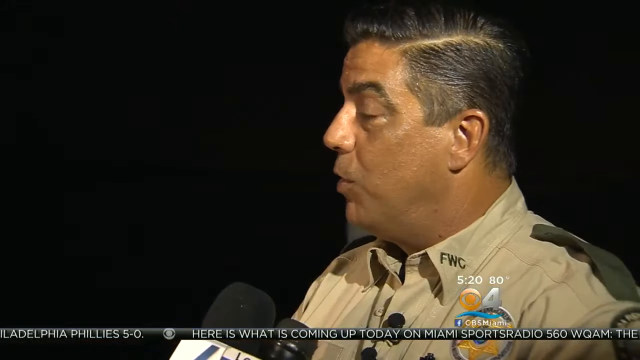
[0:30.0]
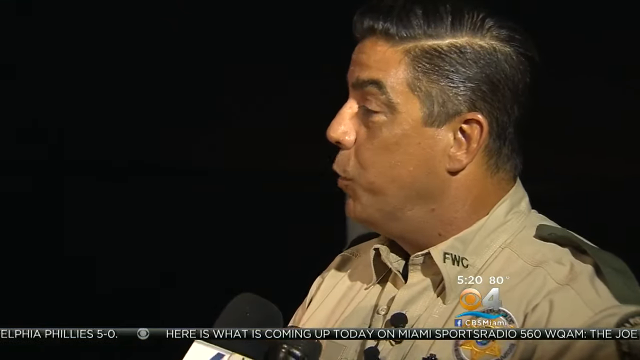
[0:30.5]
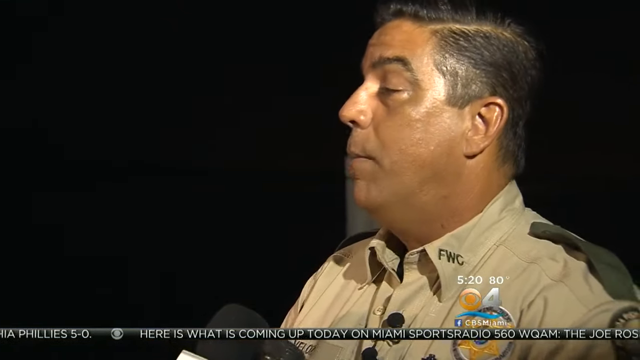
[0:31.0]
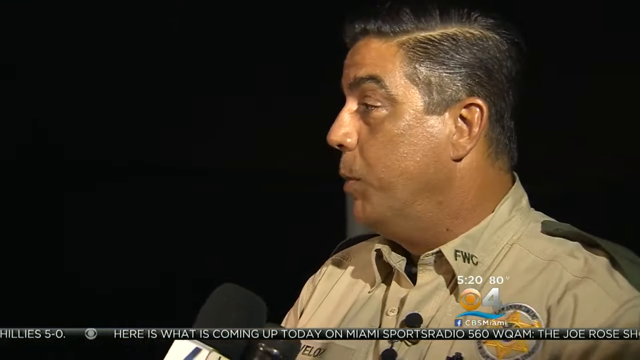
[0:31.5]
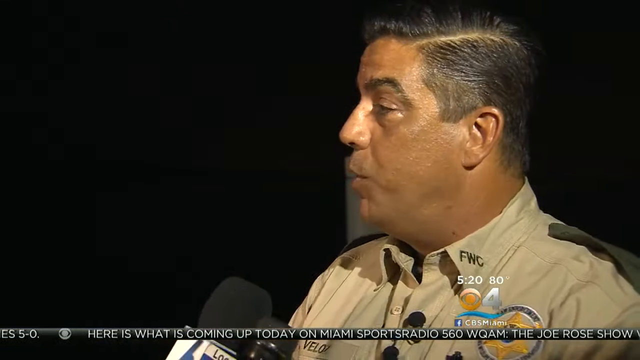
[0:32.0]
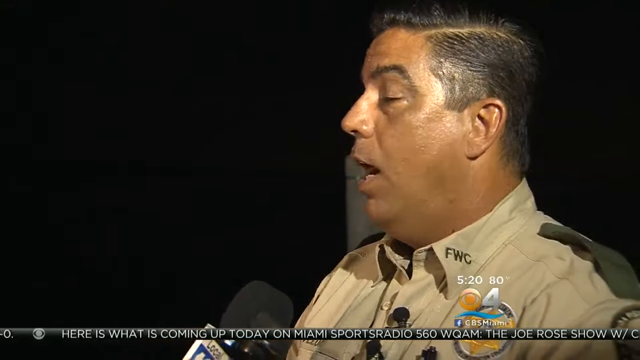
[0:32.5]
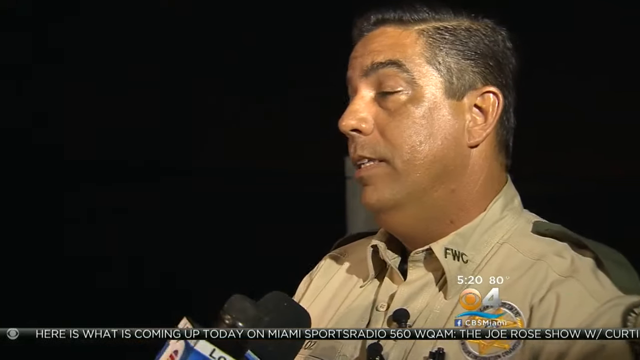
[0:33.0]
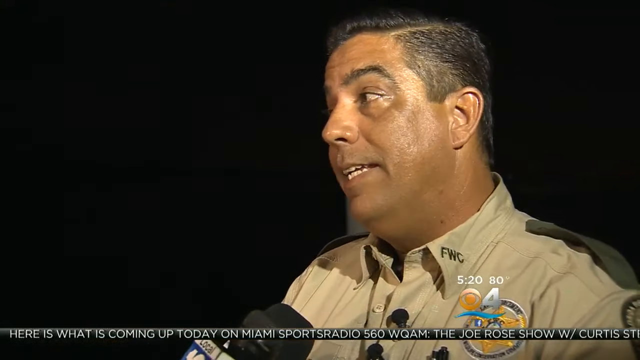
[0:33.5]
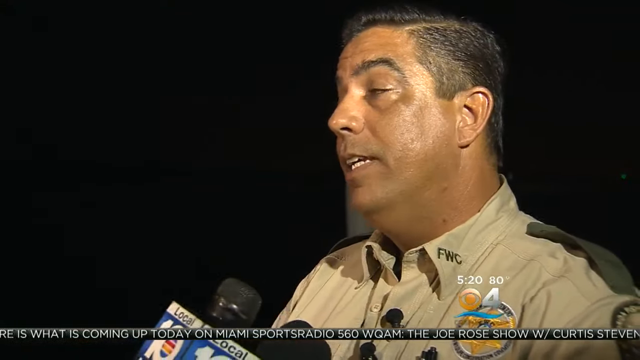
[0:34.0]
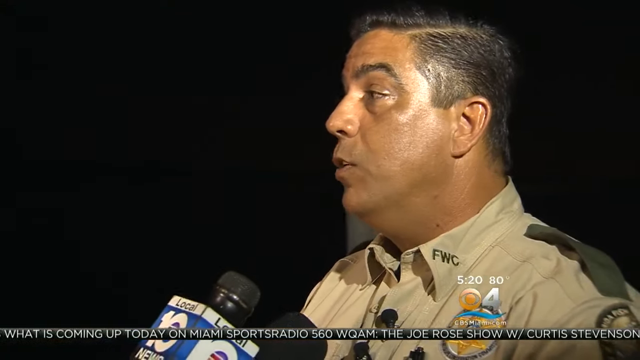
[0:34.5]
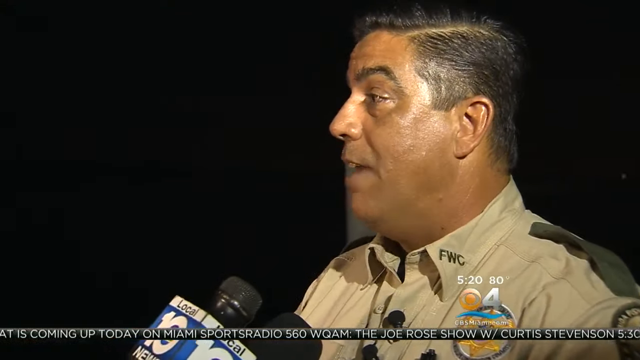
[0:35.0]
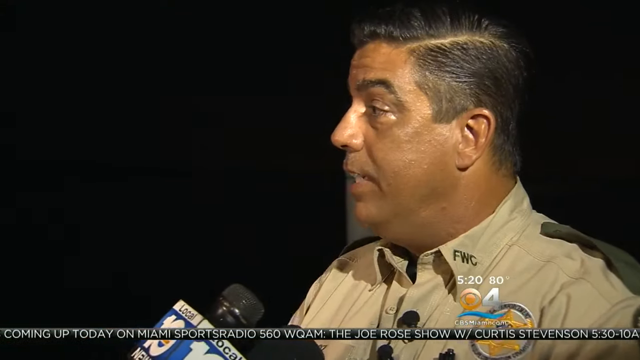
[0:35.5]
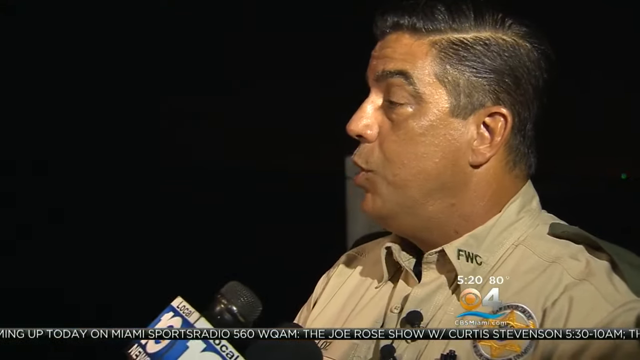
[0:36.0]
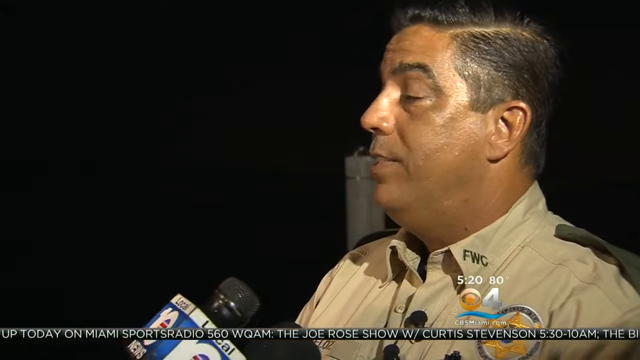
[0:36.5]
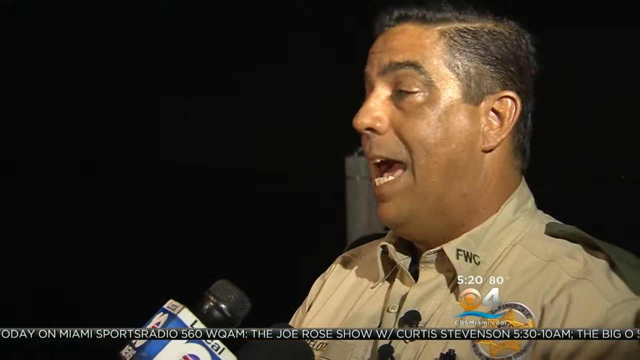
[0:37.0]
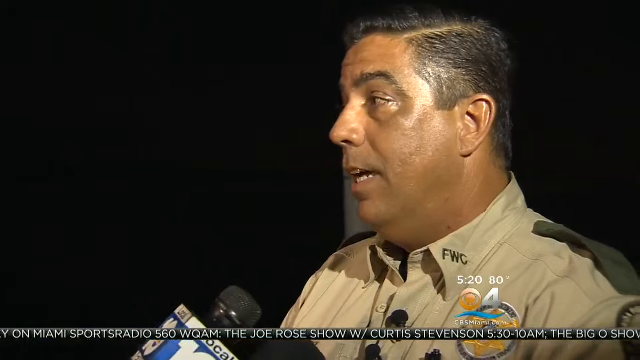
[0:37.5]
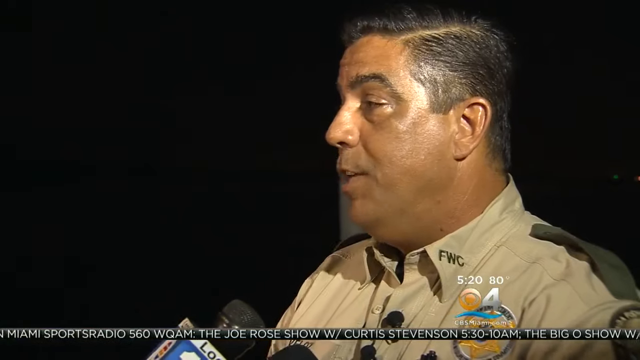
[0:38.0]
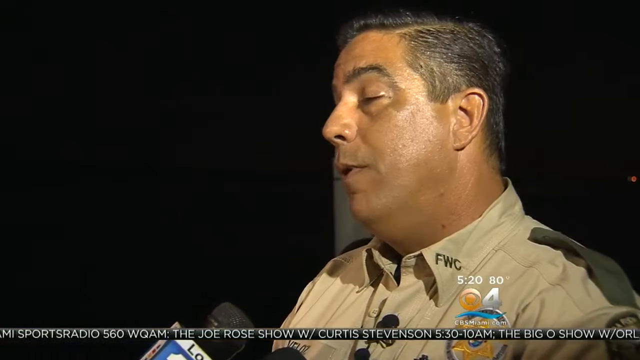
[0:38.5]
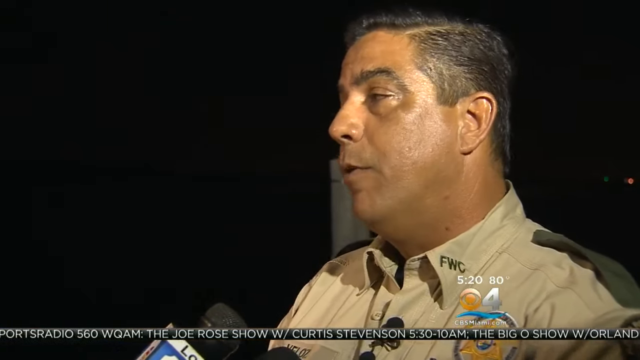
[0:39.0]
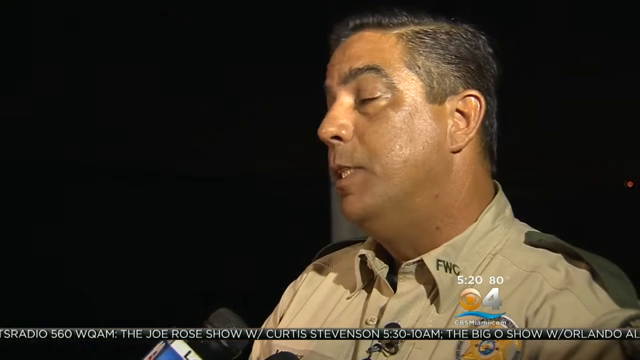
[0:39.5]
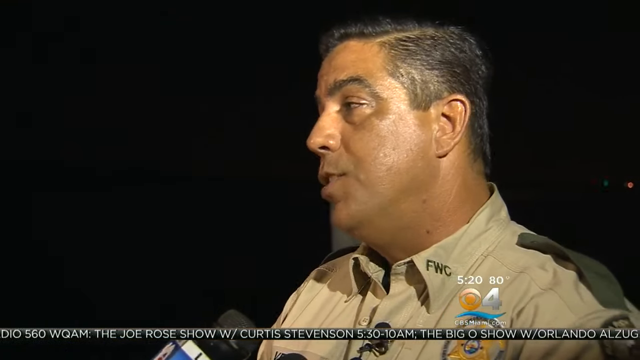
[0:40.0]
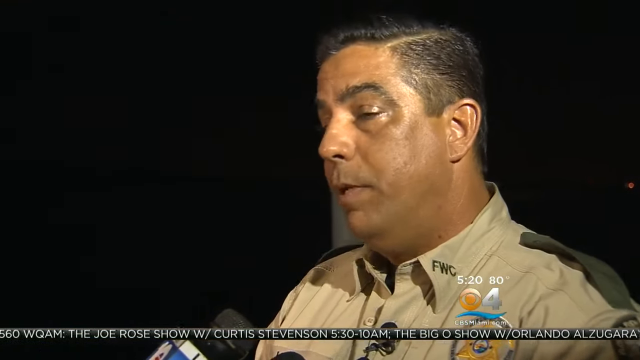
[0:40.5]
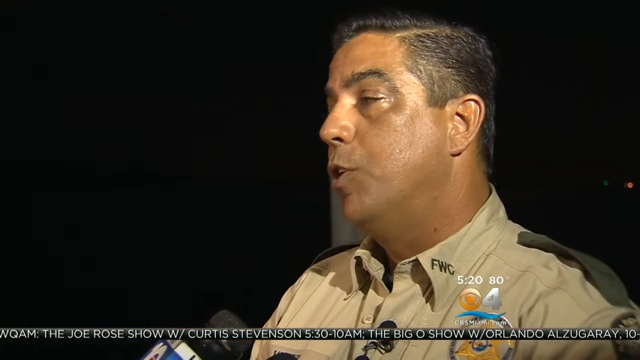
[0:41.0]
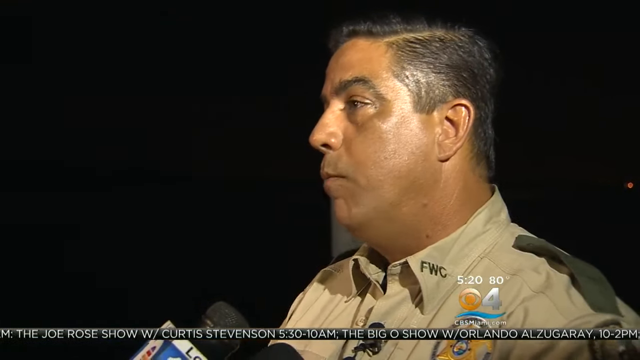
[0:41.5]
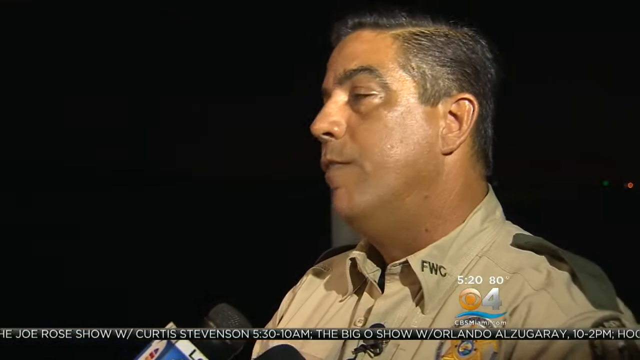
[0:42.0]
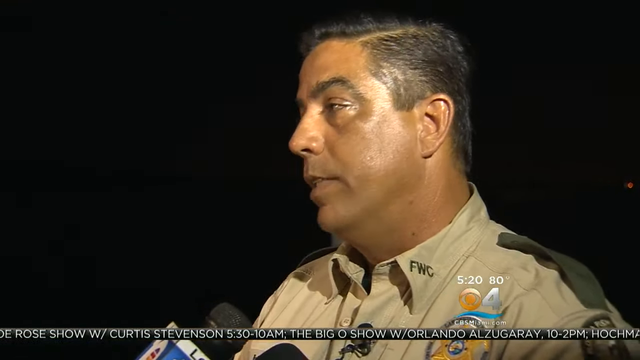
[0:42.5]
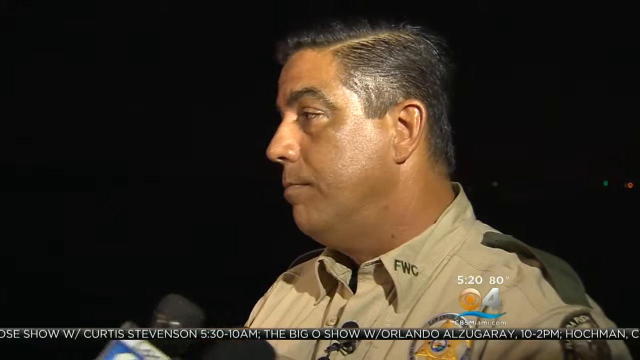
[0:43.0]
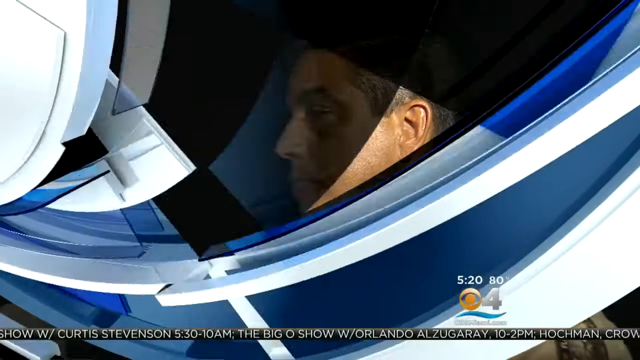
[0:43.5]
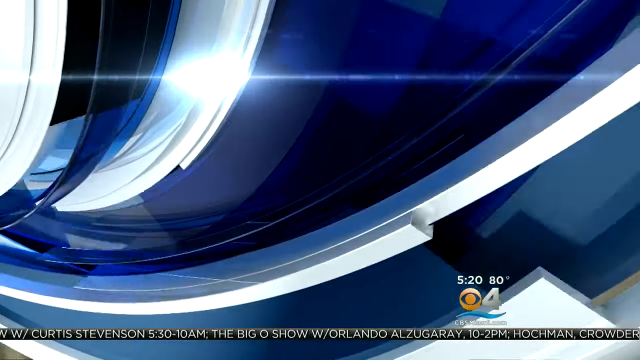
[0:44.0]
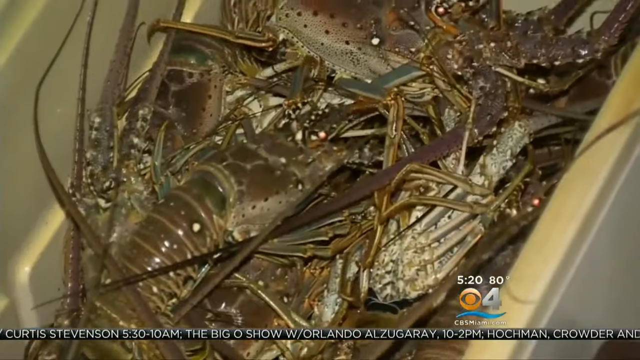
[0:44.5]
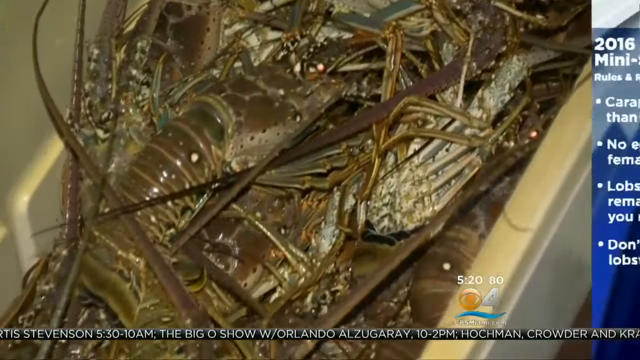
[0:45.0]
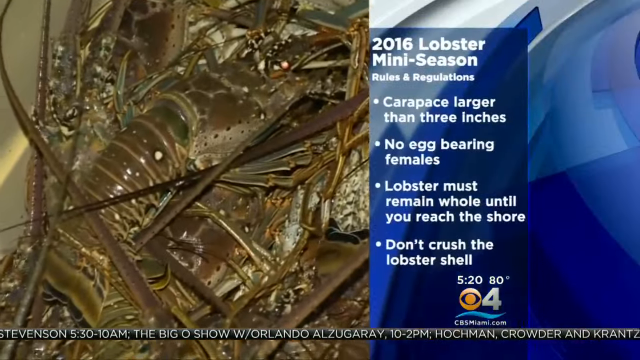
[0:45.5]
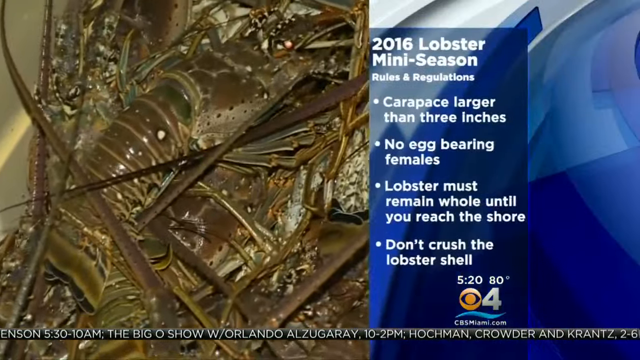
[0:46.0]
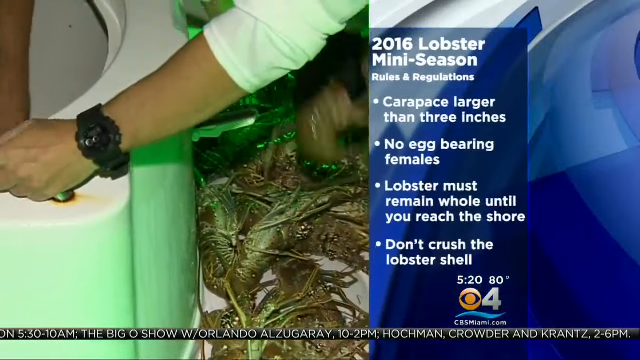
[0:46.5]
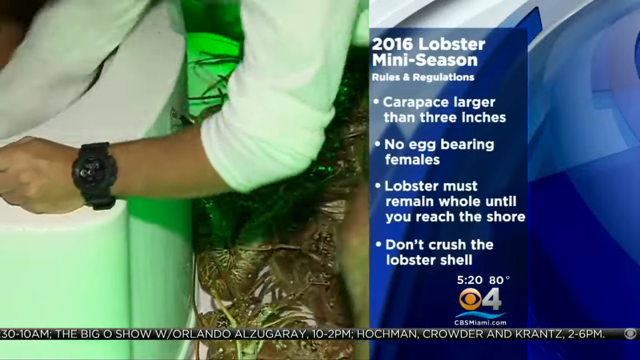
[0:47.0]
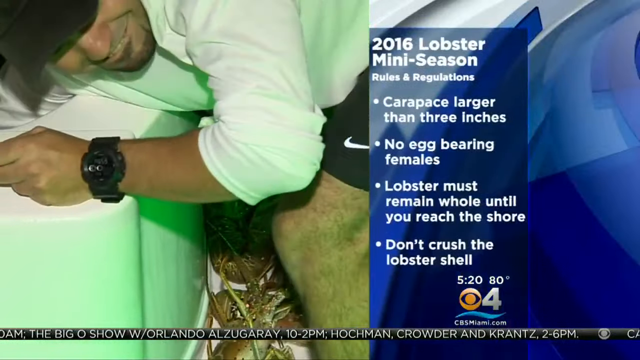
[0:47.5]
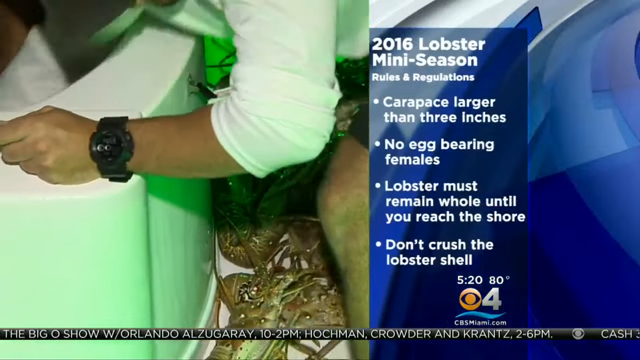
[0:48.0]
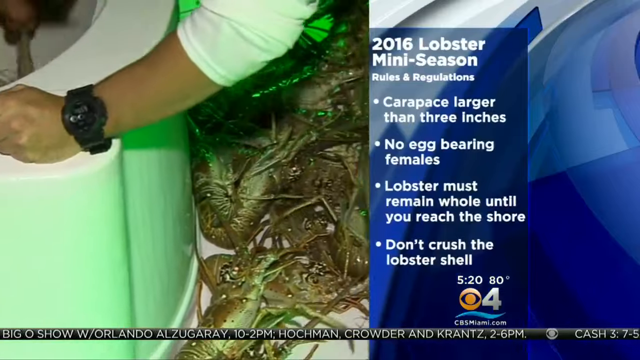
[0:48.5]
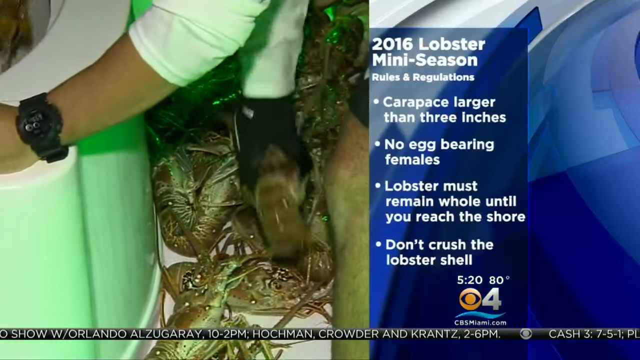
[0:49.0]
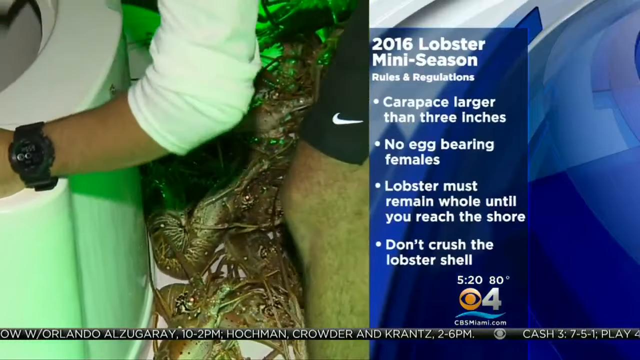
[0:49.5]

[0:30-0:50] A man with a short haircut, who looks like a police officer or possibly a game park ranger, talks while someone interviews him. People are busy taking out the lobsters, catching many of them, and handle them without fear. There are many lobsters.